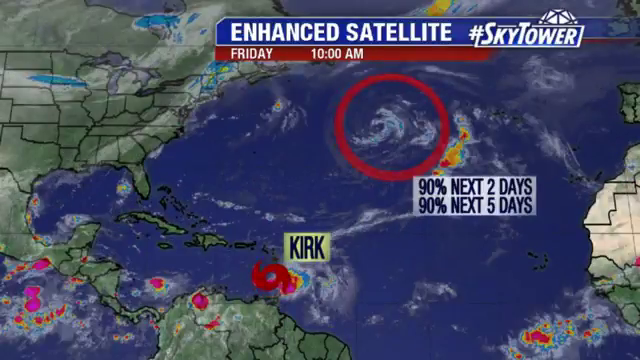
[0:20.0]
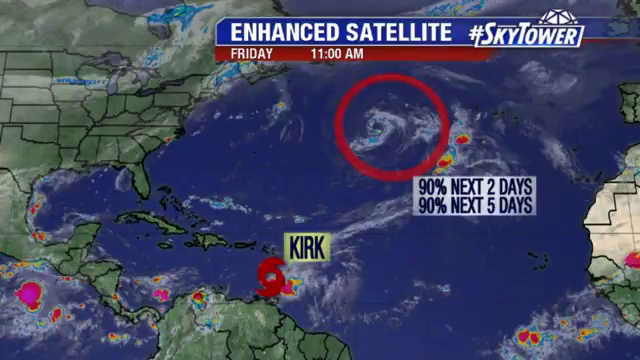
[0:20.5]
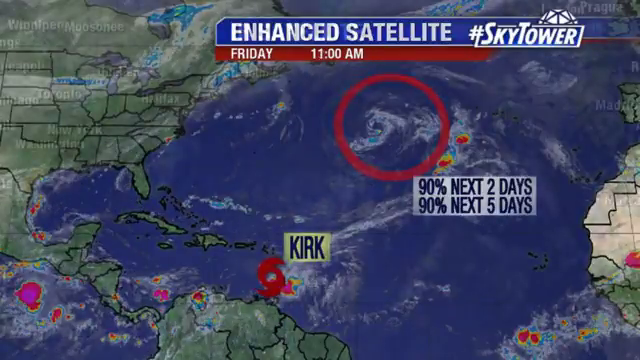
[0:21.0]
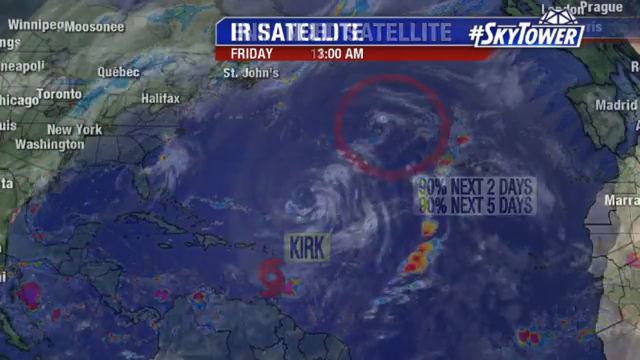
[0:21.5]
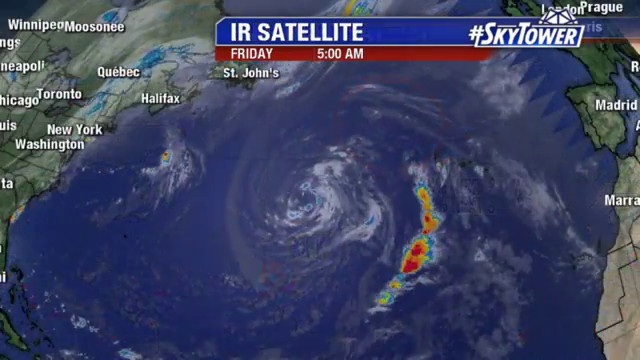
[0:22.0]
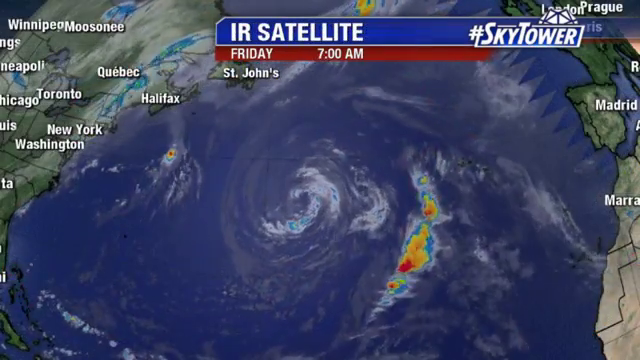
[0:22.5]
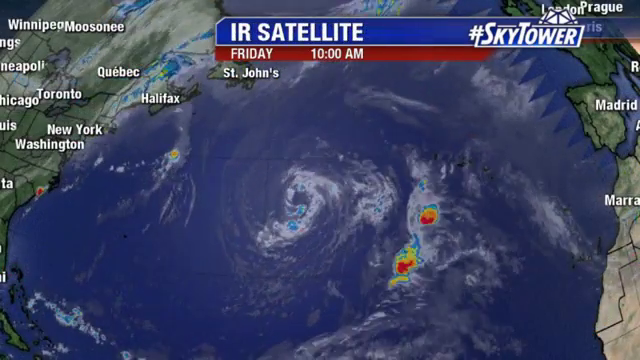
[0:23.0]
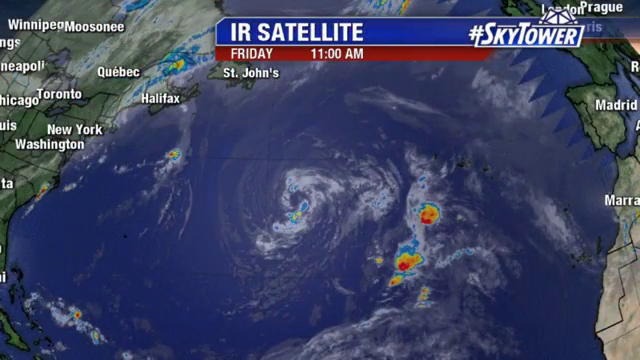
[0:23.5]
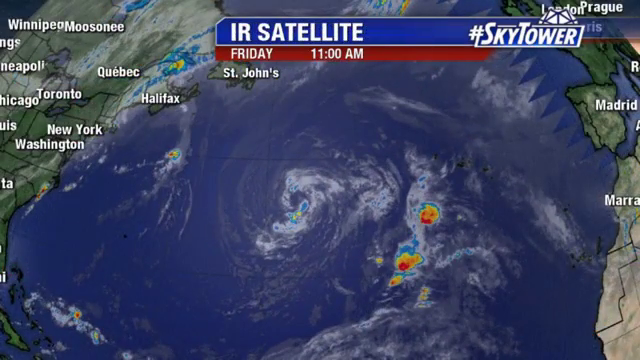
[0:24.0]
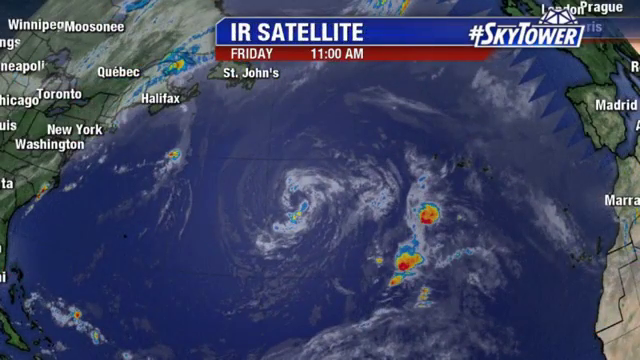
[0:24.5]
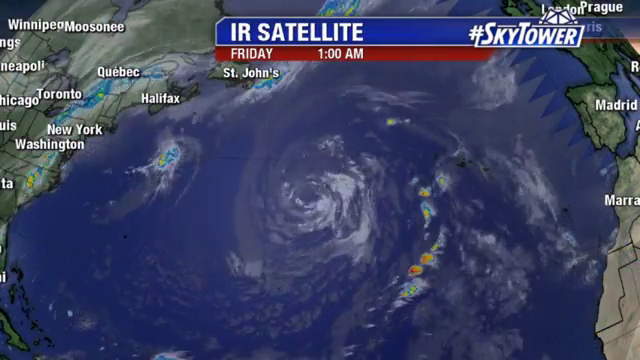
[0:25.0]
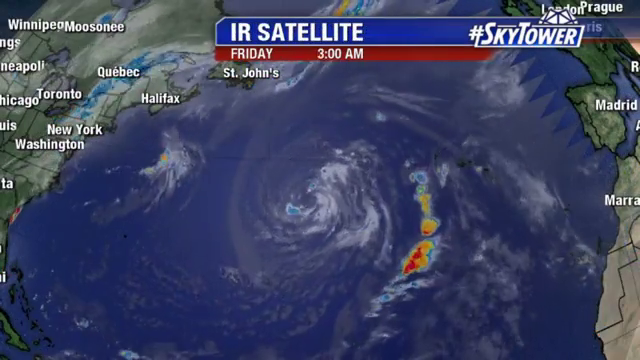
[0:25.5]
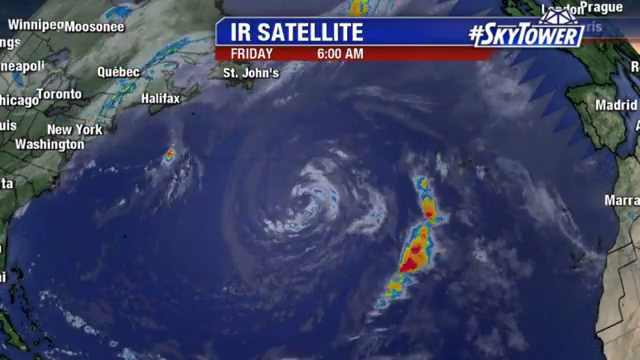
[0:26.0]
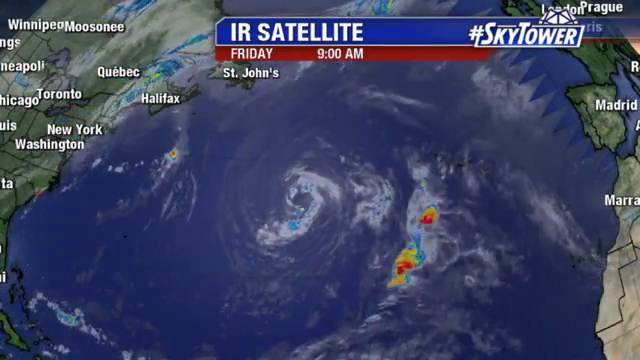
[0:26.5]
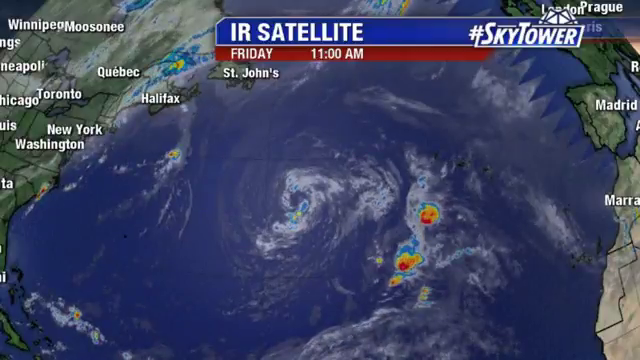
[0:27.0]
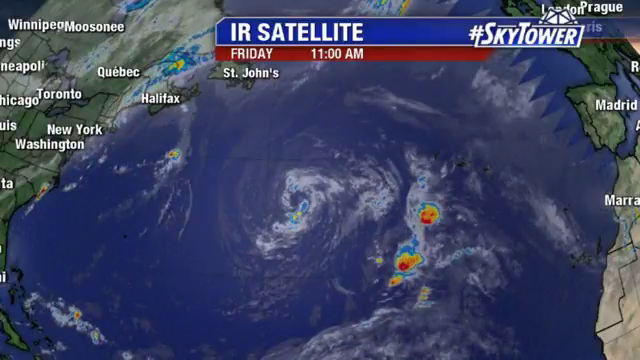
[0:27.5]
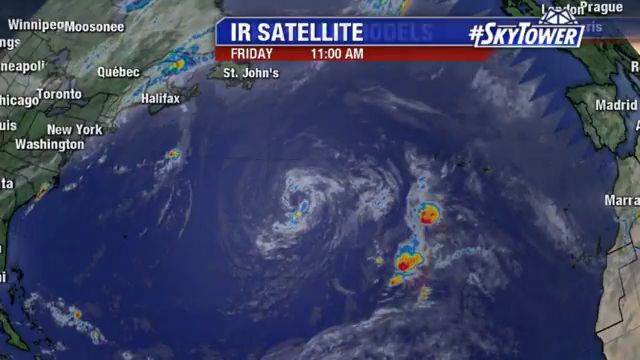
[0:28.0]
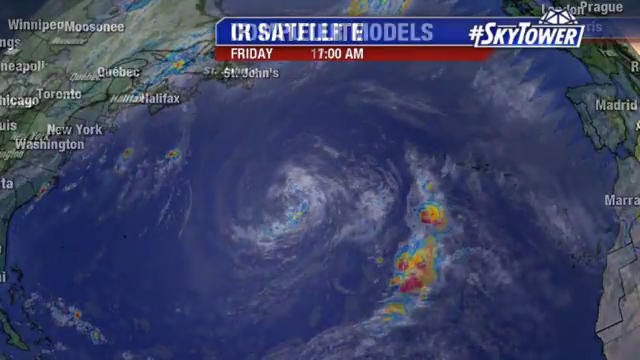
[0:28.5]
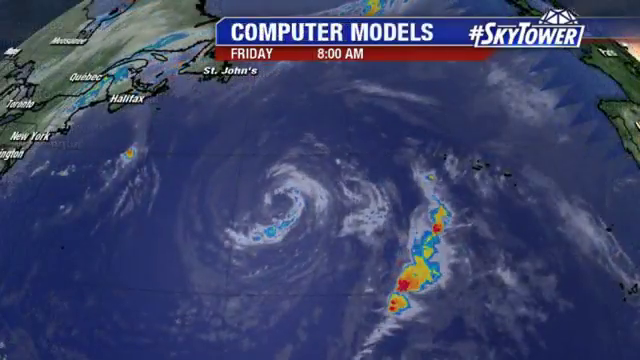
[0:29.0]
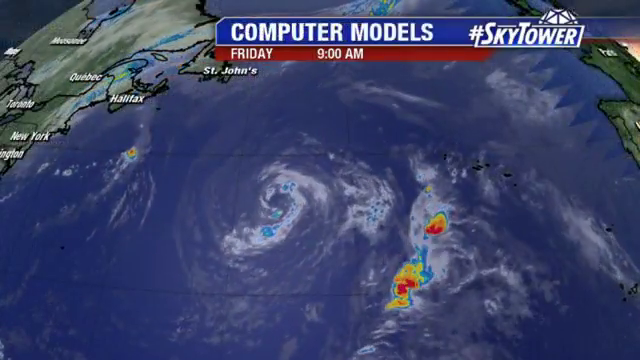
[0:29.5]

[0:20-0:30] The camera zooms in a tiny amount on the clouds swirling in an anti-clockwise direction. This part of the weather forecast is called the IR satellite, and it is still Friday at 11 a.m. Place names now appear: on the left are Halifax and Quebec up in Canada, as well as New York and Washington. The weather system is forming in the middle of the Atlantic. On the right, to the east, are cities such as Paris, Madrid and Marrakesh, so the storm covers a very large distance.